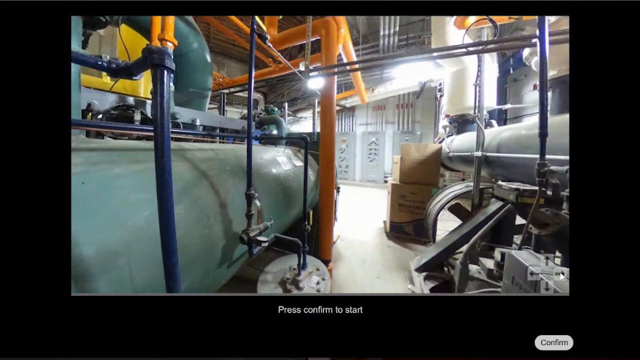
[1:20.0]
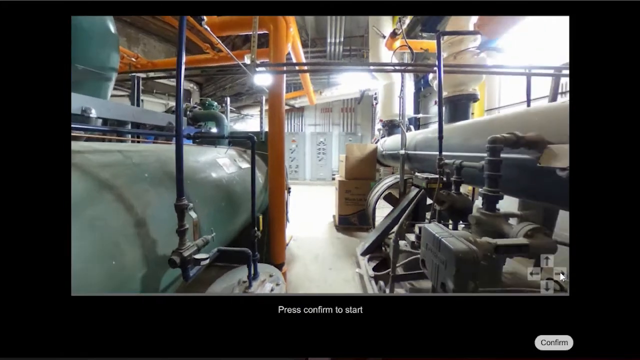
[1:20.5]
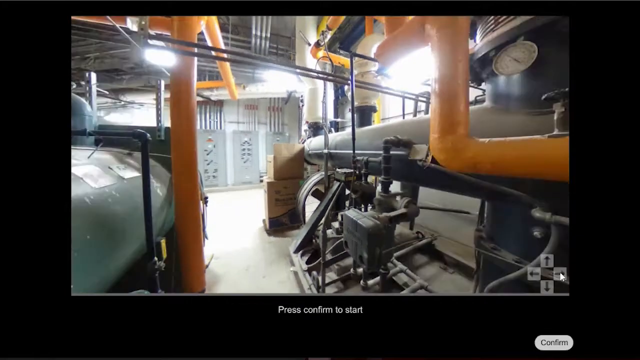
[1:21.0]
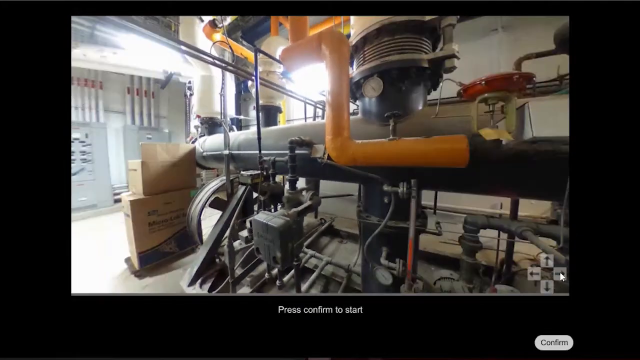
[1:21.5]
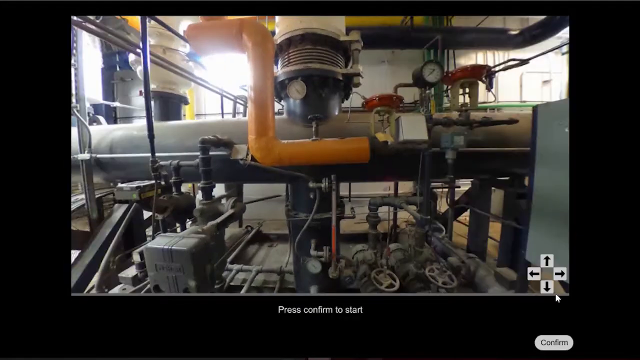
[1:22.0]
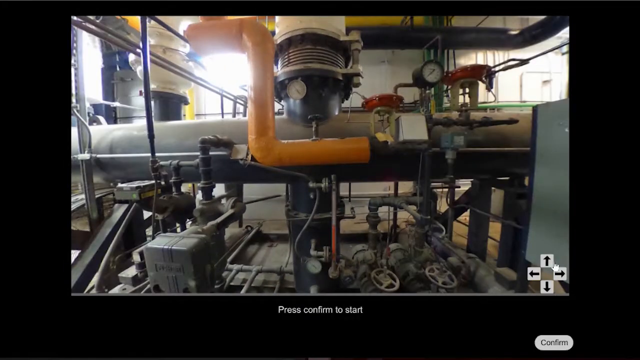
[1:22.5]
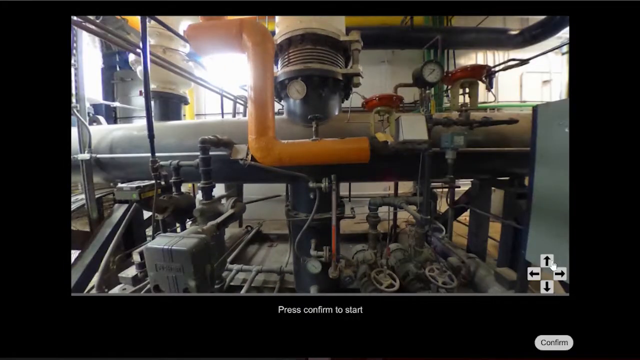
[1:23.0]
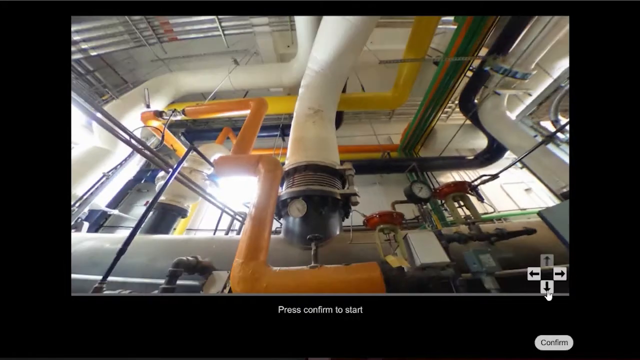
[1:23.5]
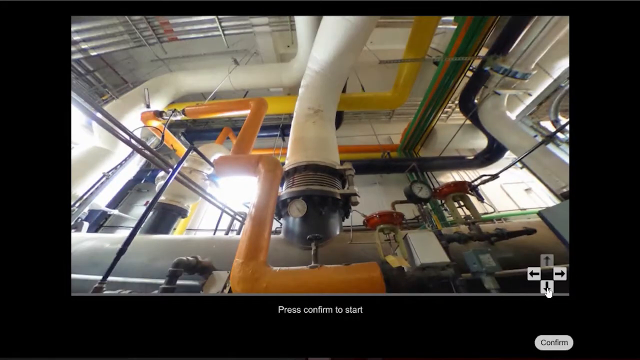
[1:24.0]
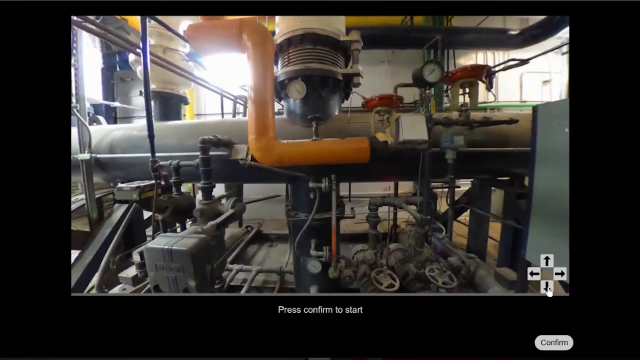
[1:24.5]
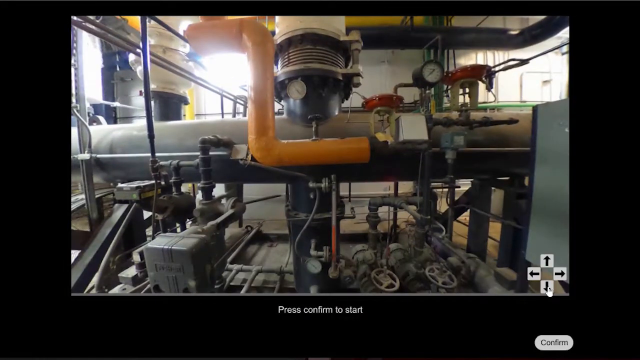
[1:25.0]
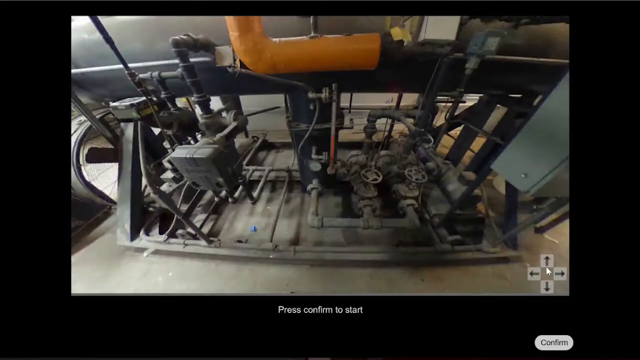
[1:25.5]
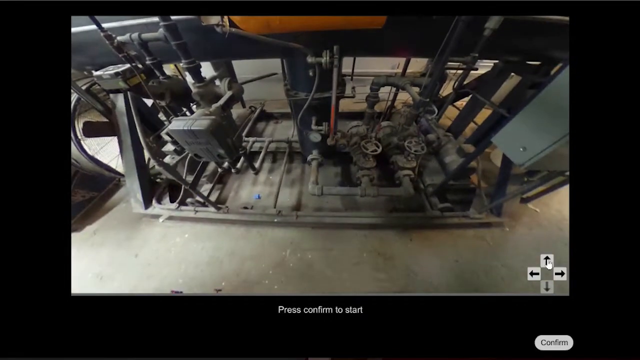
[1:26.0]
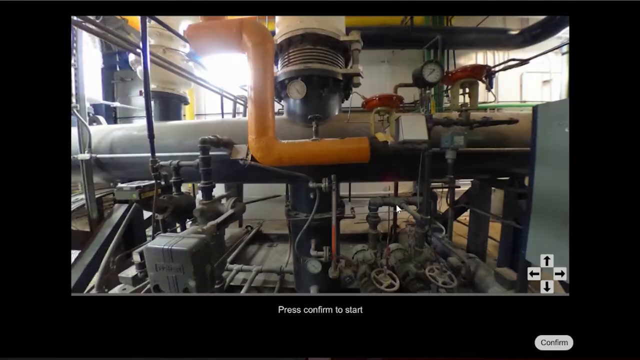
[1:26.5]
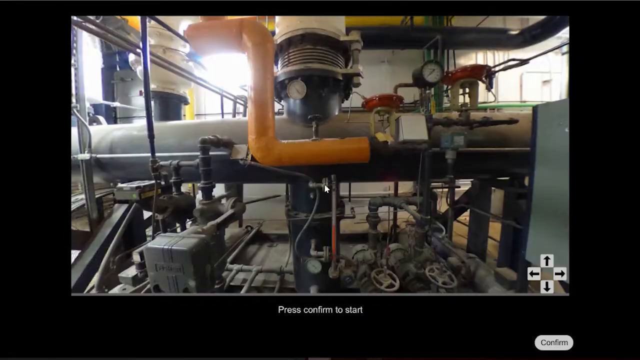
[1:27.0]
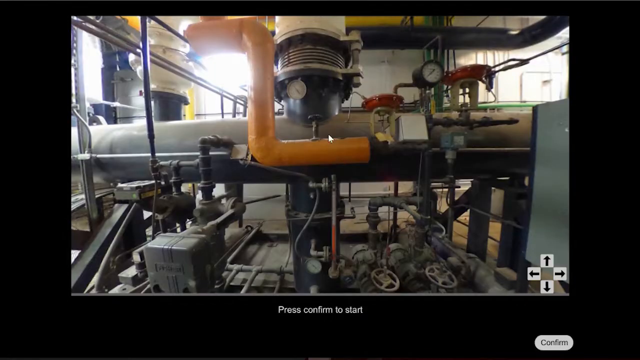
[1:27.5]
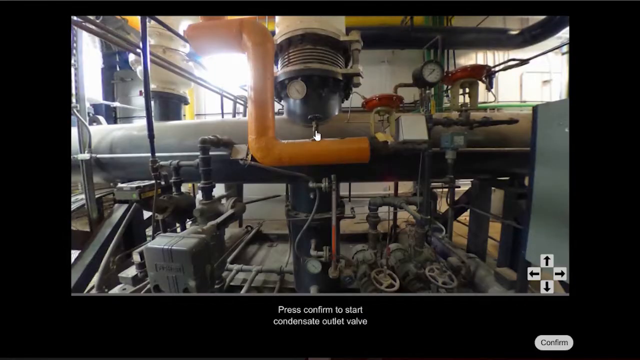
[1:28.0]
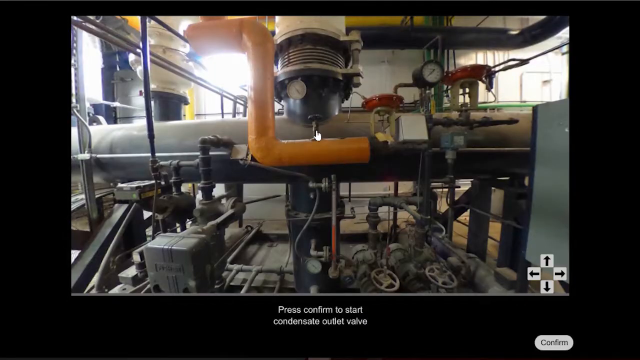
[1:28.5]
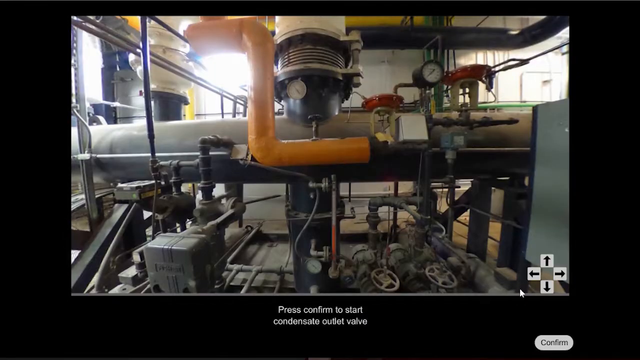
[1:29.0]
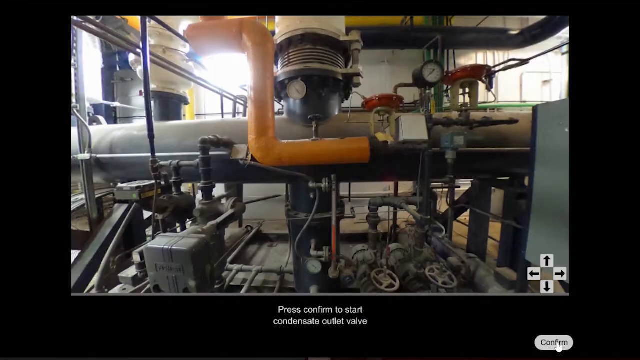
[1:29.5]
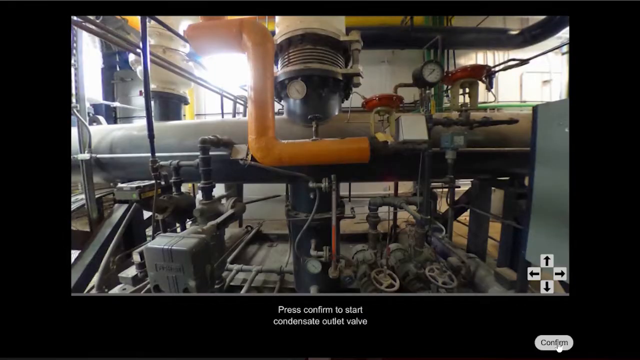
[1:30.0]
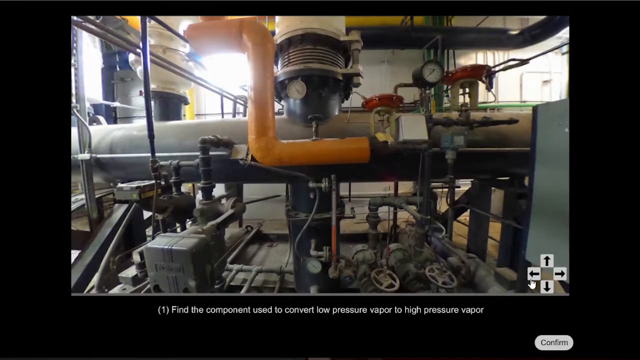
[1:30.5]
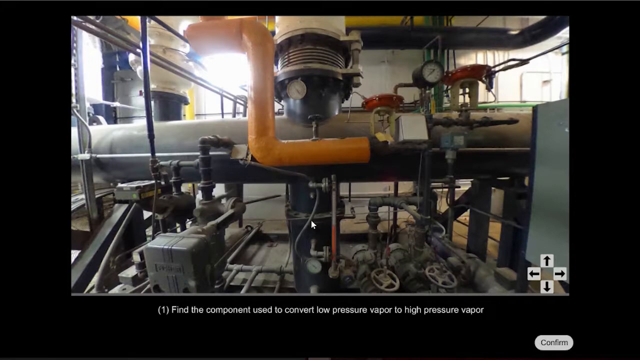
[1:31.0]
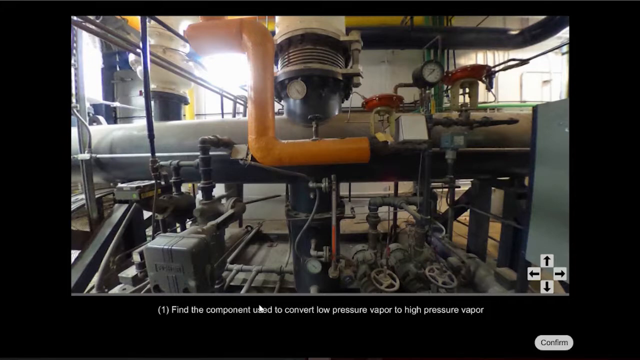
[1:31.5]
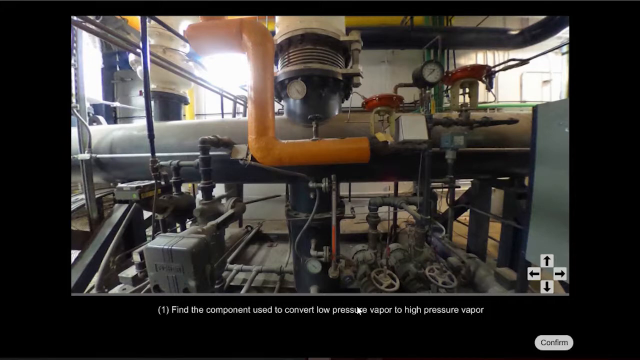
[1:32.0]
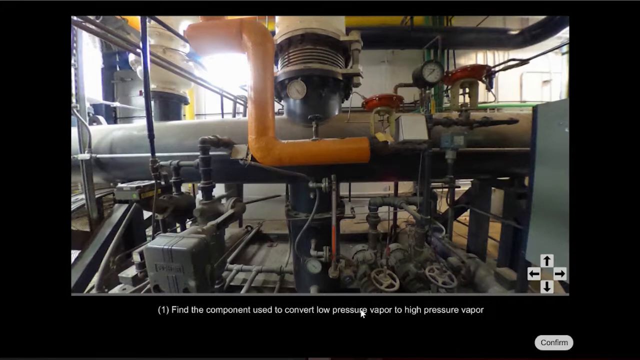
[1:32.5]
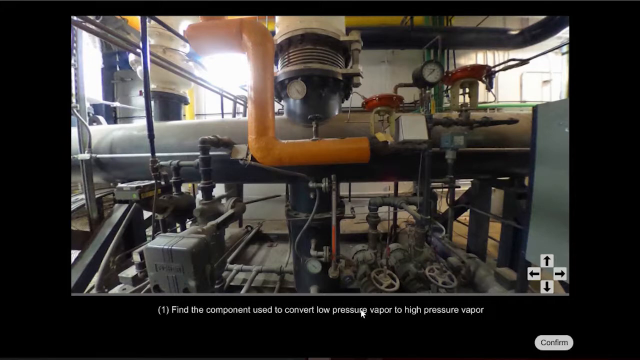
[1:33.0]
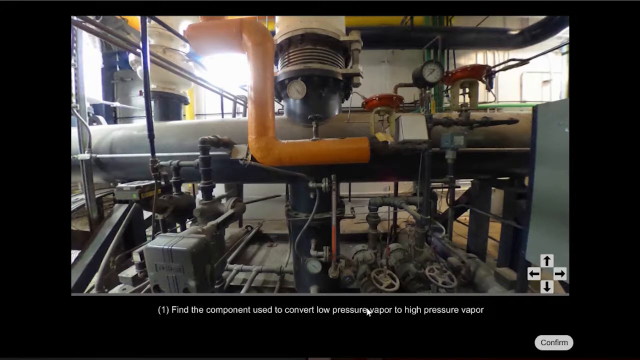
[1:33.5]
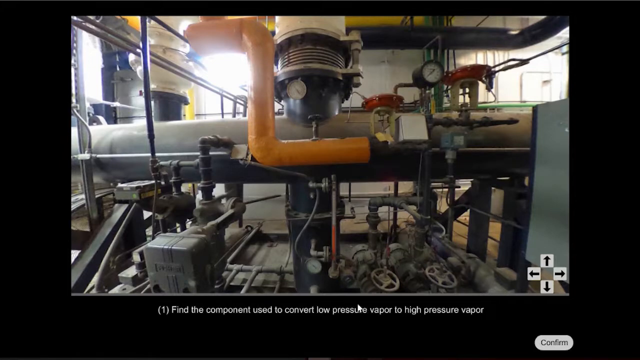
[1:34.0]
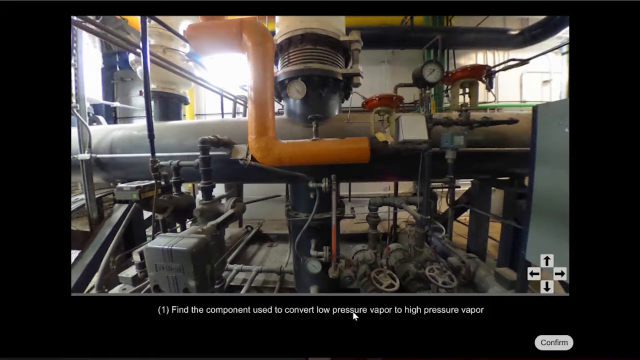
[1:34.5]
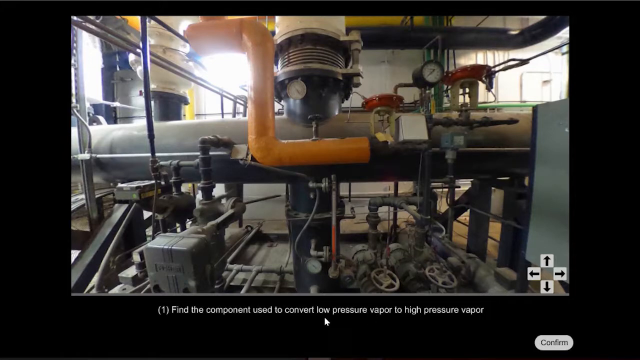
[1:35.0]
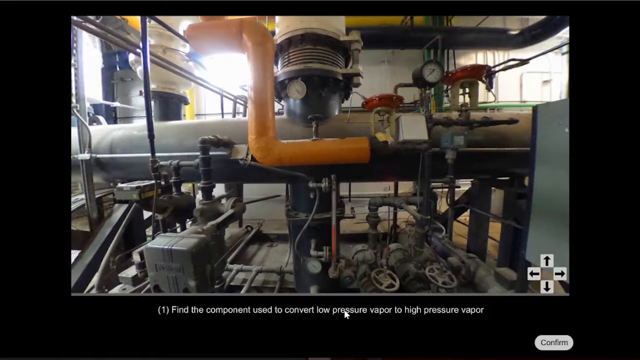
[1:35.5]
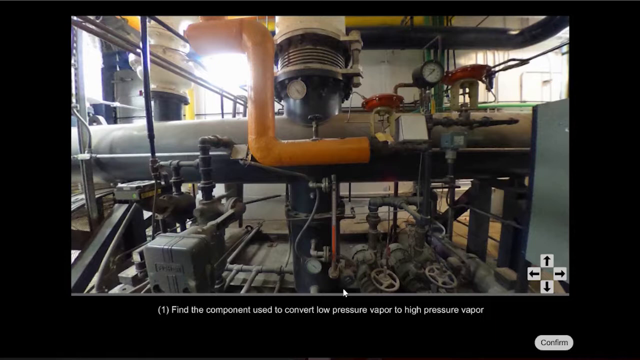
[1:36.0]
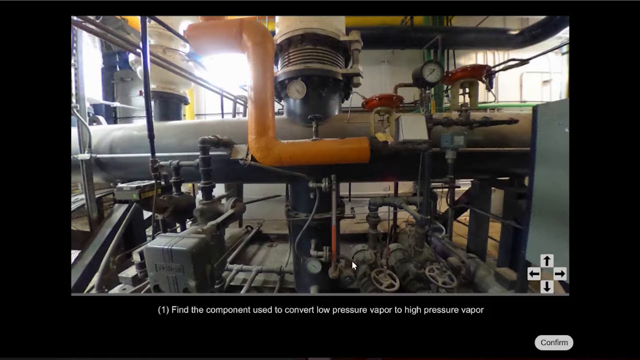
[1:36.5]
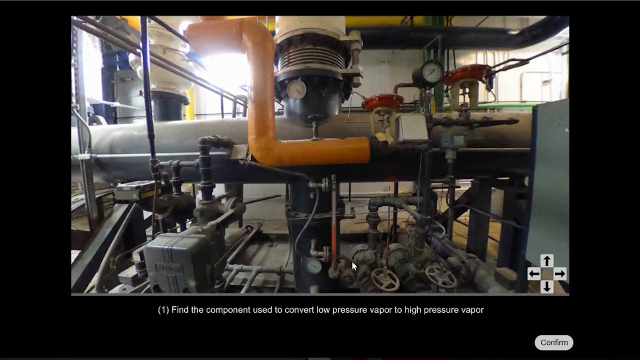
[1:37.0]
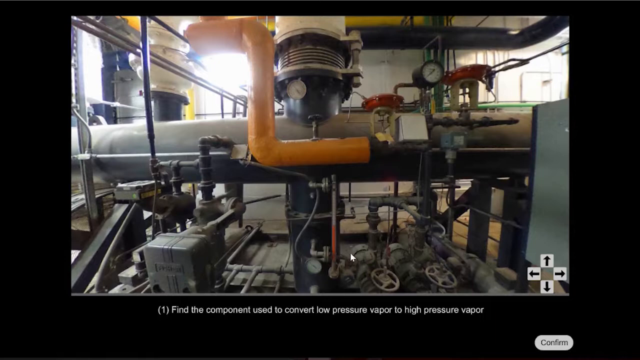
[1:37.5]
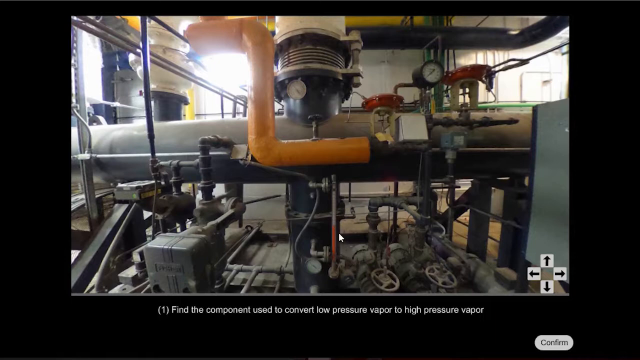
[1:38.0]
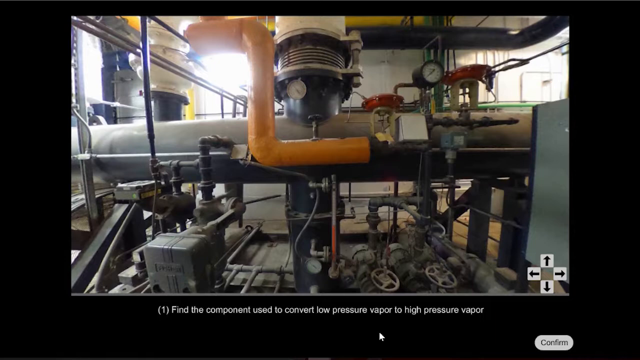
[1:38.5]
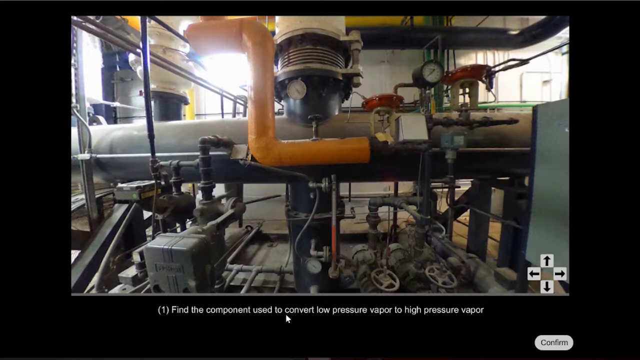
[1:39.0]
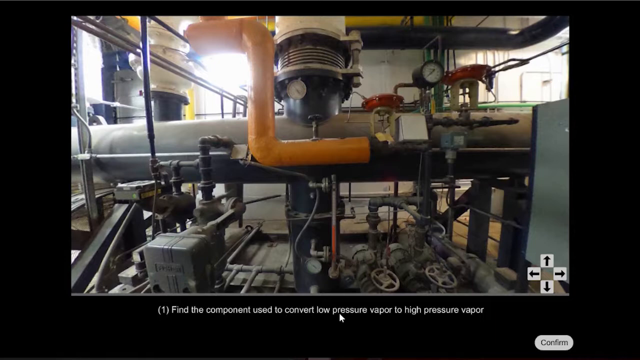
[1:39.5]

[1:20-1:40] The camera pans to the right as the user clicks the right arrow, showing a different view of the units, piping, gauges and valves. As the panning continues right, the user eventually pans the camera up, revealing more pipes, and then the camera looks down. The user clicks on a pipe, and text at the bottom reads, "1. Find the component used to convert the box pressure vapor to high pressure vapor." An image of the machinery then appears. The machinery is color-coded, and the pipes going in and out of it seem to be color-coded: there are blue pipes, orange pipes, and what appears to be a yellow pipe, though it could be orange given the lighting. The machinery in the image is used as a training and testing tool.